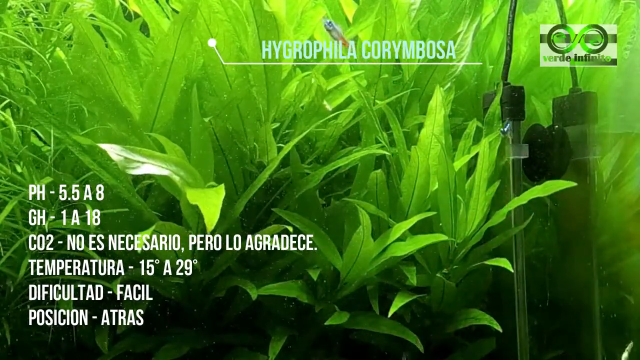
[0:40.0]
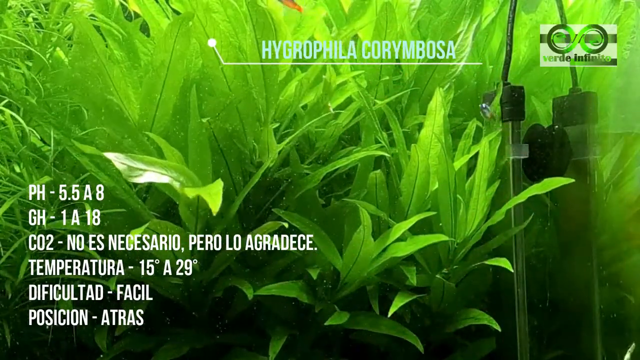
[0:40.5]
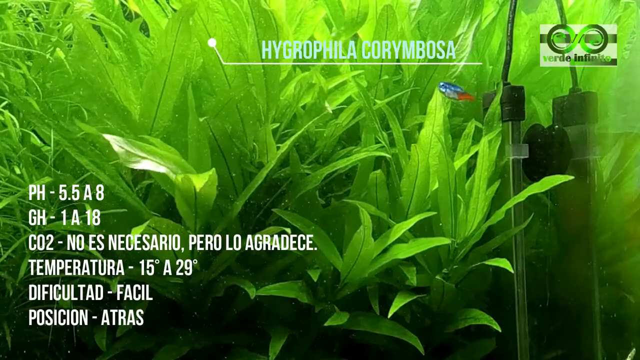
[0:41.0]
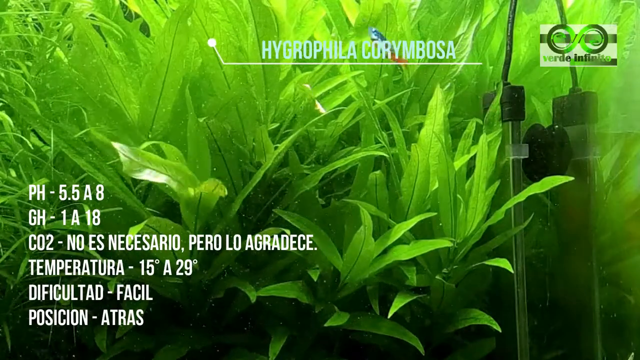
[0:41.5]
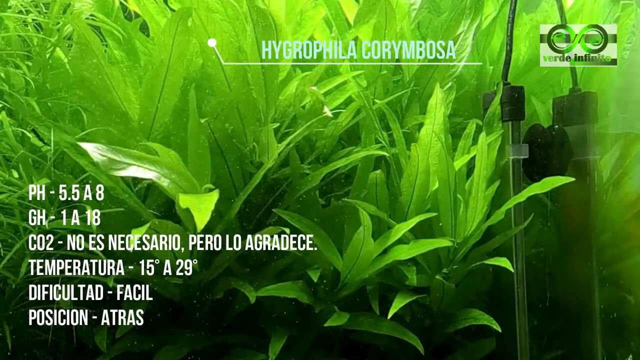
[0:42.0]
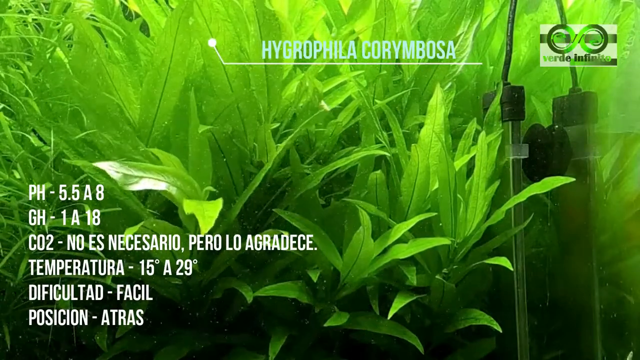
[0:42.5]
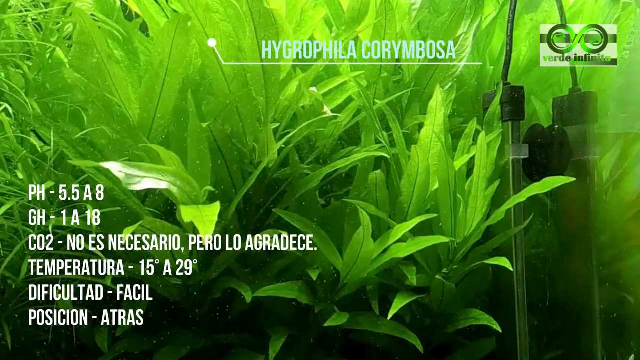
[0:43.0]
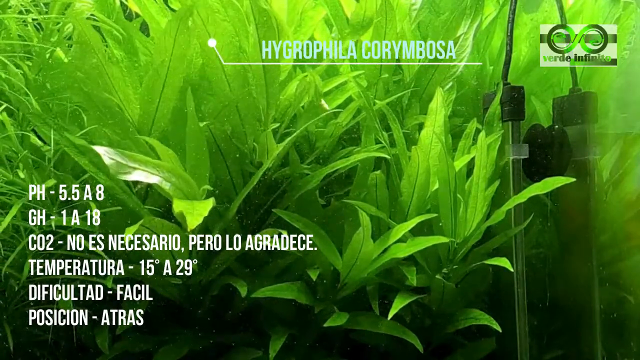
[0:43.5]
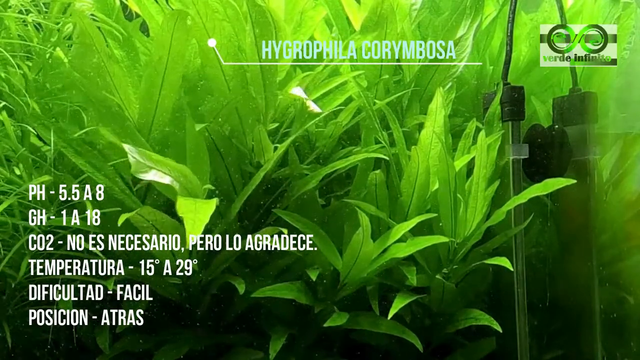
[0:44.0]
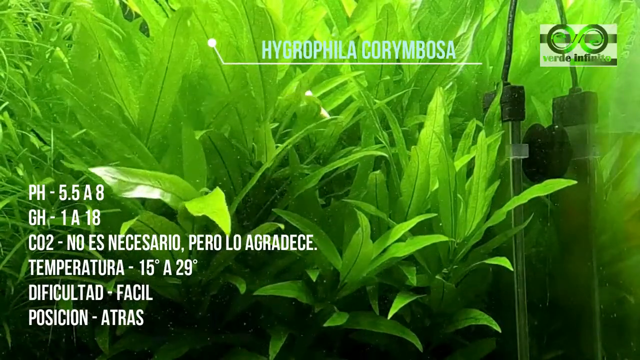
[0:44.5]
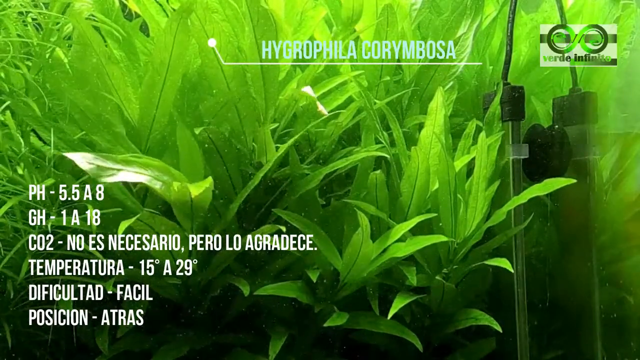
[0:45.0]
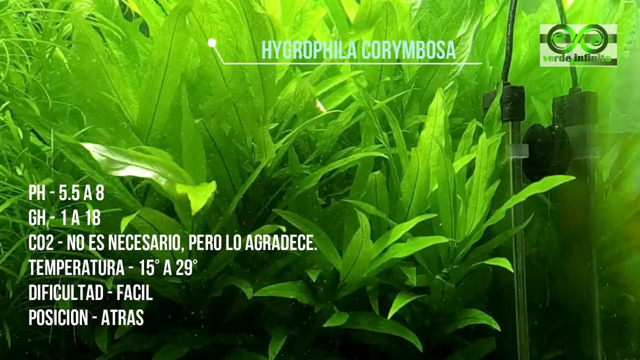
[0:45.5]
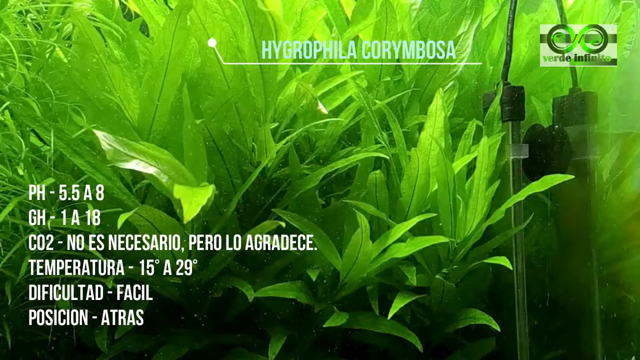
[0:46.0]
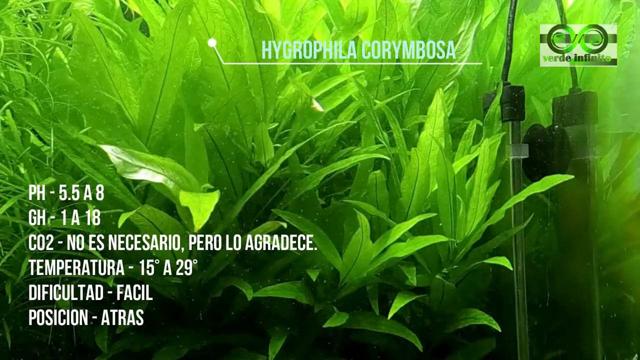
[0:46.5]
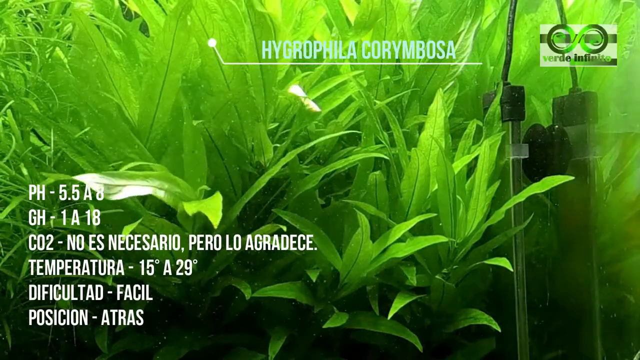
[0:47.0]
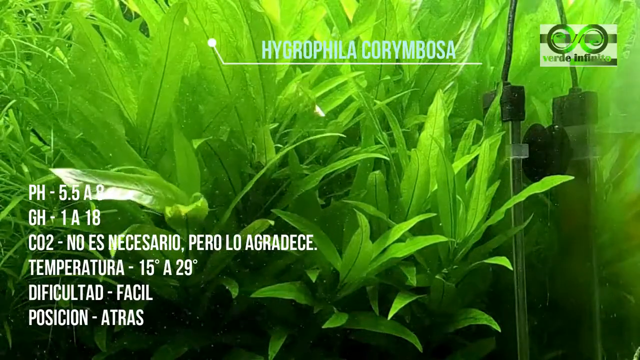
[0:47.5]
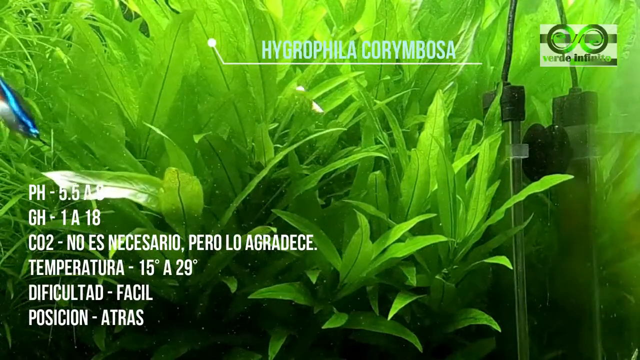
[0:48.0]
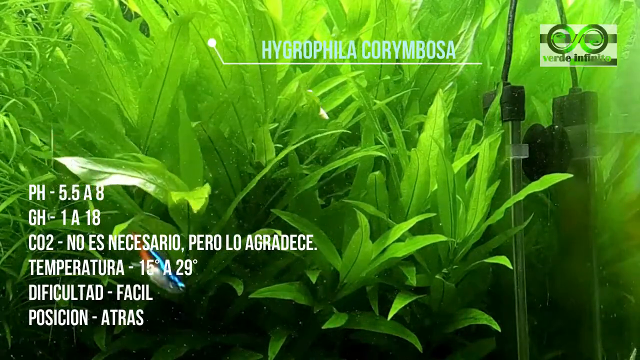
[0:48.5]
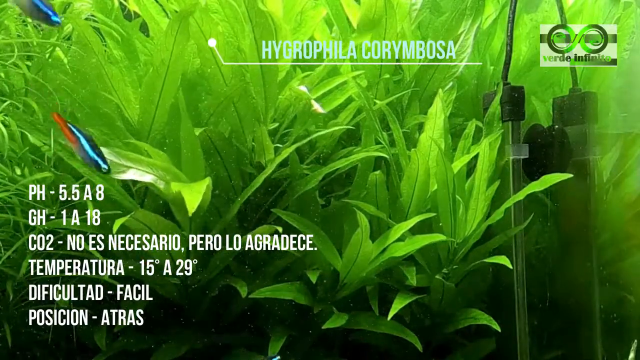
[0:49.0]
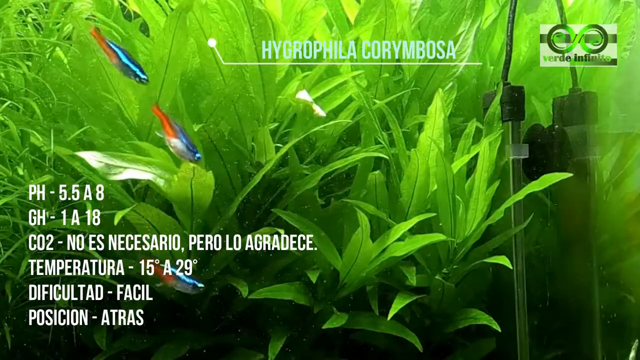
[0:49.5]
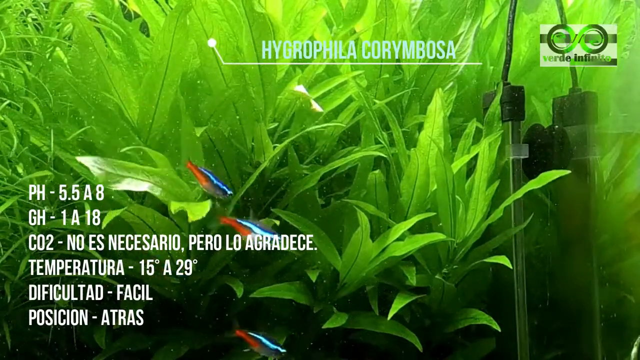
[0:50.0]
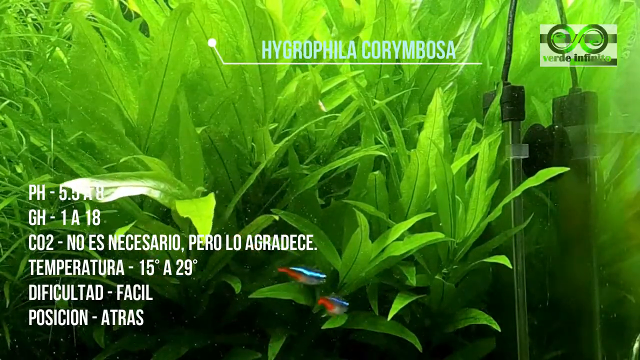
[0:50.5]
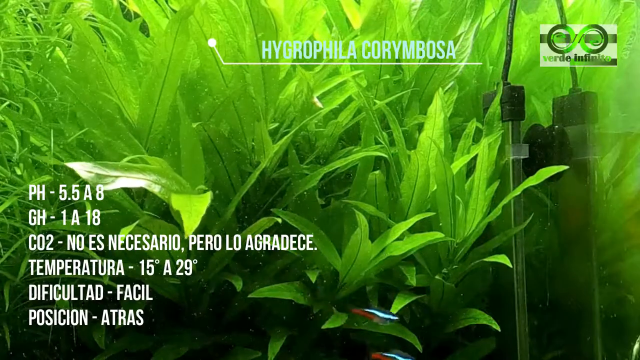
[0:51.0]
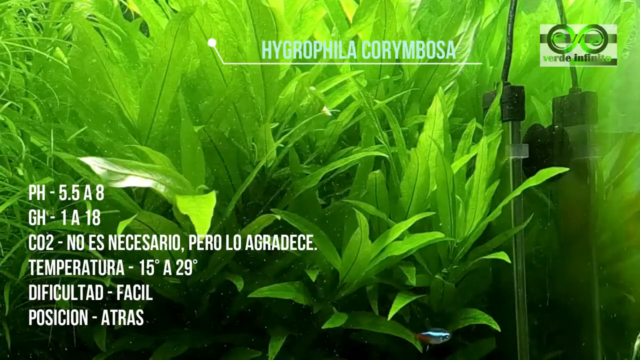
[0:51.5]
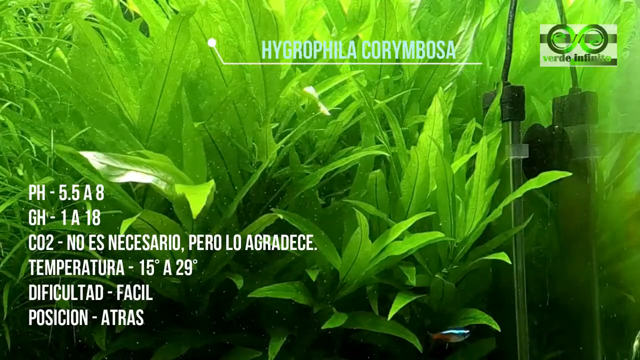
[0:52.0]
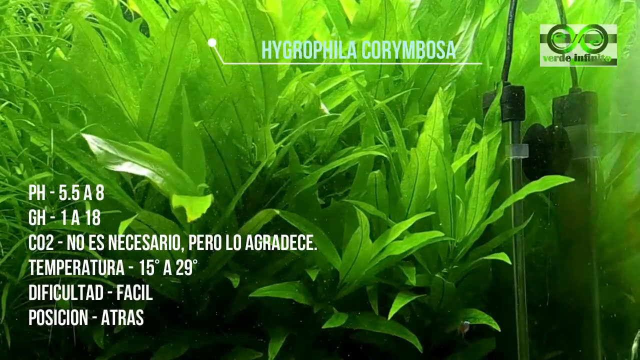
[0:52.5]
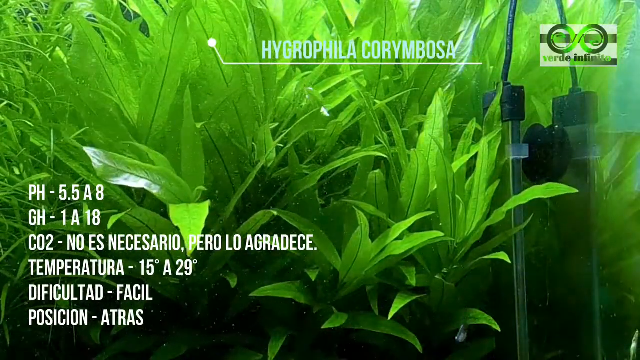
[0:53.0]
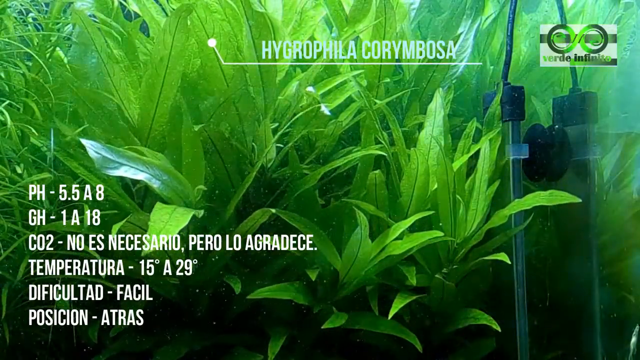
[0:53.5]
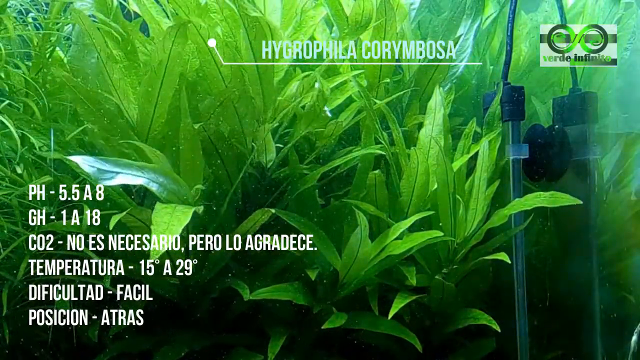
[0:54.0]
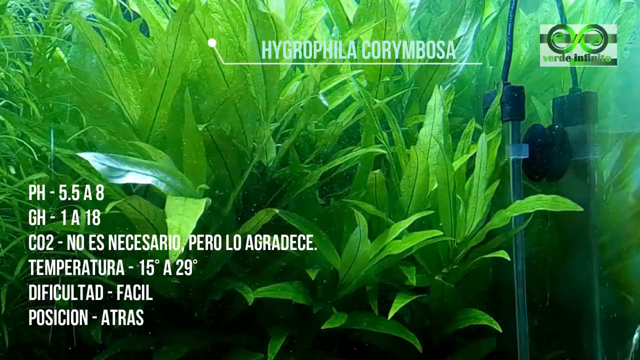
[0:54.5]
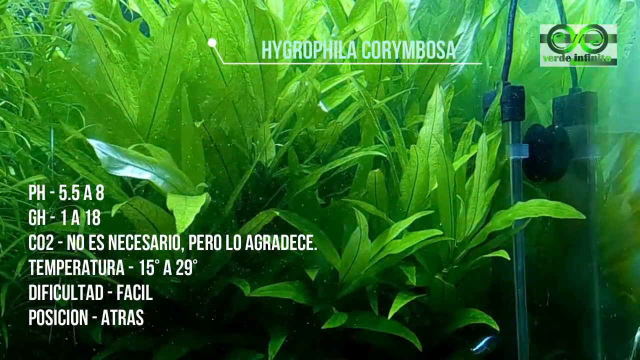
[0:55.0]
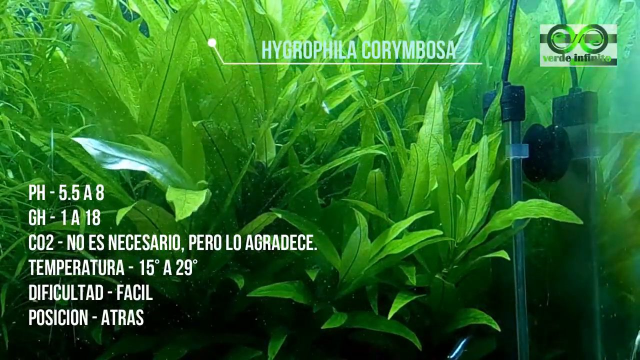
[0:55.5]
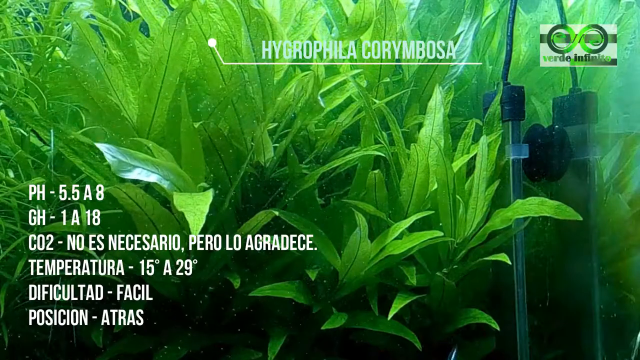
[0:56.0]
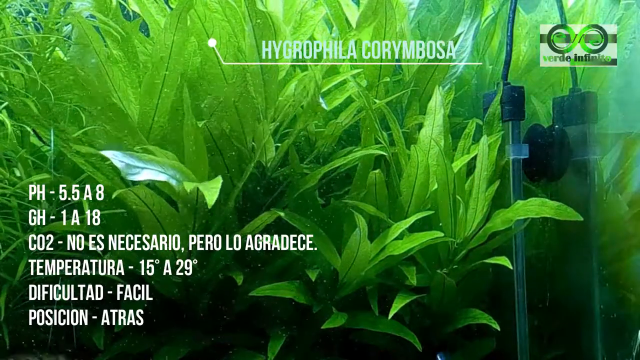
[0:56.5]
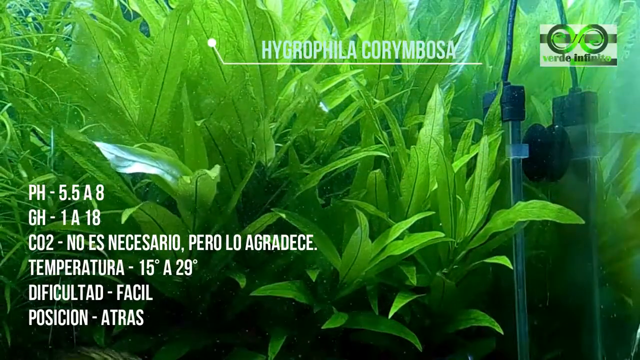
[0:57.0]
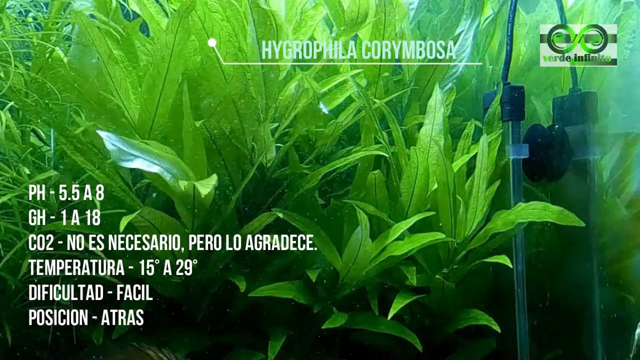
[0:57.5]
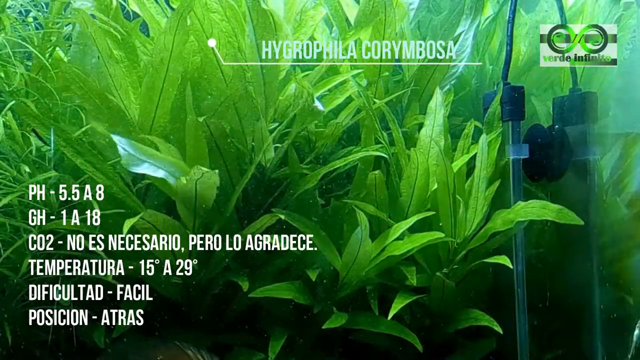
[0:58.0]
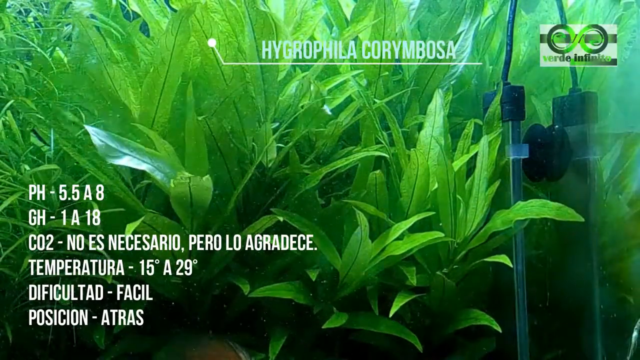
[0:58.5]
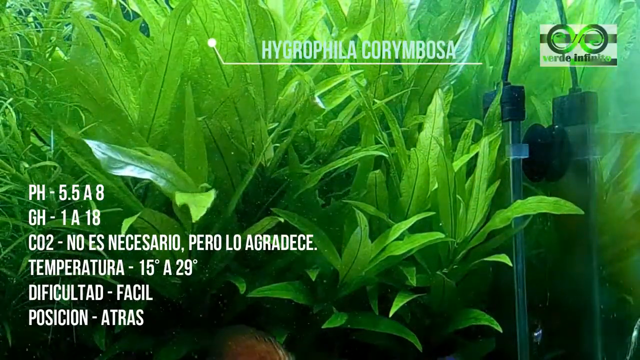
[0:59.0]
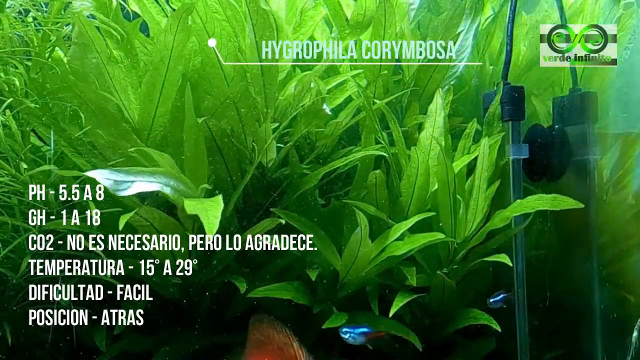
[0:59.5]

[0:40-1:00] The fish tank remains in focus, with lush green plant life in the background covering almost the entire screen. On the right of the screen is some equipment that apparently helps regulate the tank, and in the top right is a logo, possibly for the company that produces these tanks: Verde Infinitivo. White text appears on the screen, apparently not in English but maybe a Romance language, giving statistics about the tank: the pH level, the water temperature, which appears to be 15 by at least one measure, the CO2 level, and difficulty and position. The difficulty is easy and the position is behind, though it is not clear what that refers to. Small fish occasionally appear, about four of them, all the same colour: a kind of blue with a light-blue stripe running through the middle and a little orange tail. They dart in and off the screen very quickly before disappearing. The plants continue to waver in the background.